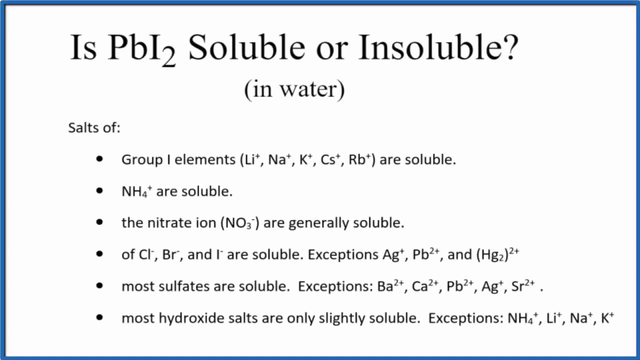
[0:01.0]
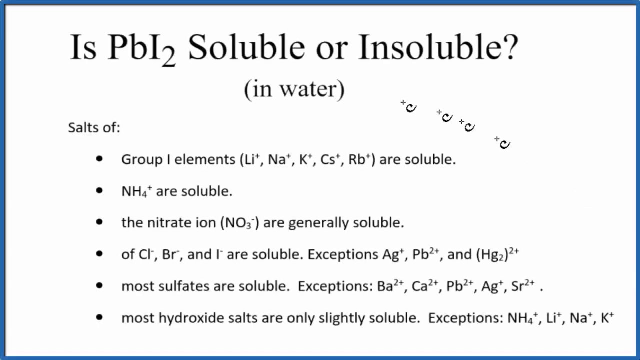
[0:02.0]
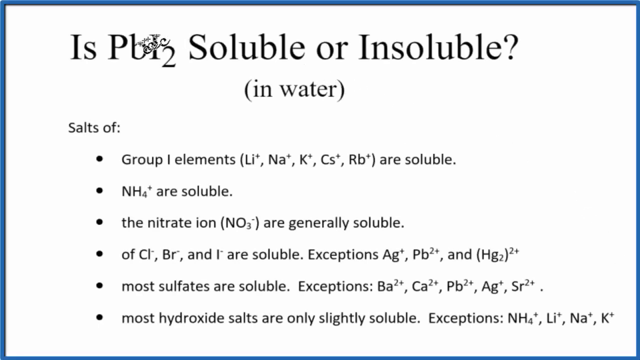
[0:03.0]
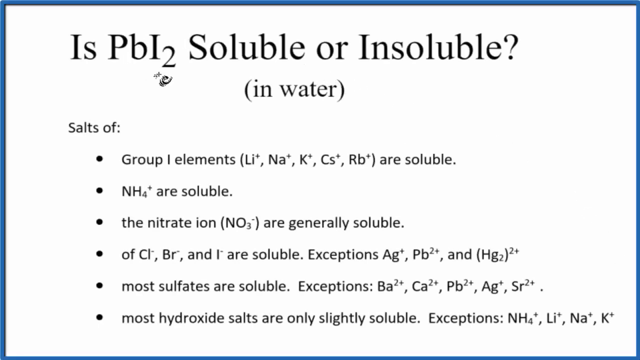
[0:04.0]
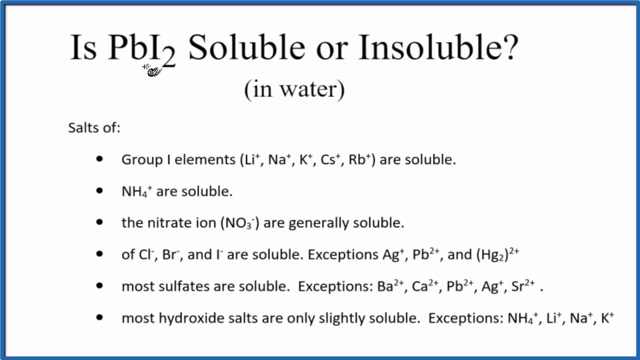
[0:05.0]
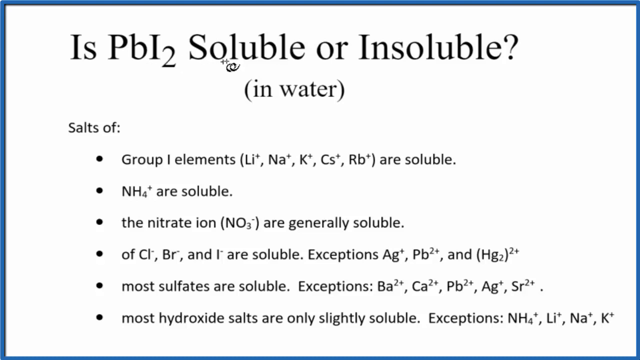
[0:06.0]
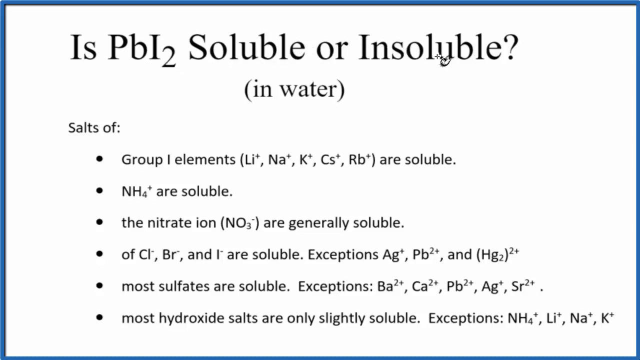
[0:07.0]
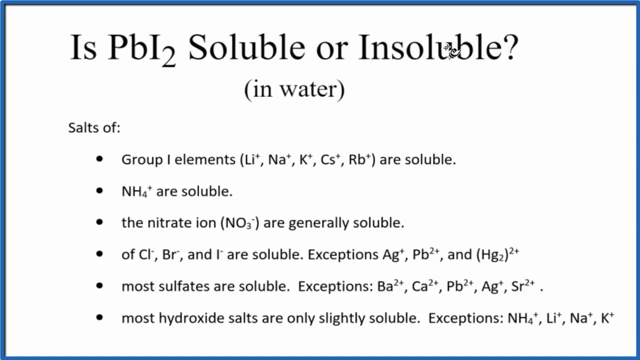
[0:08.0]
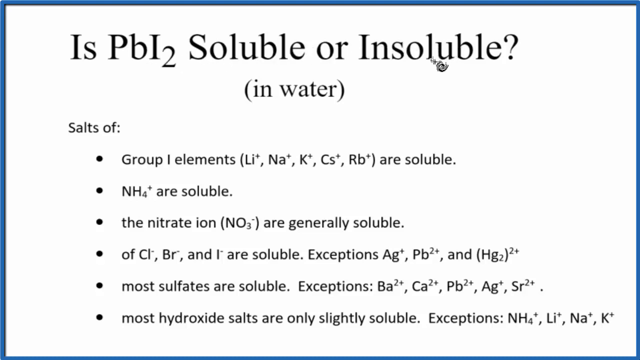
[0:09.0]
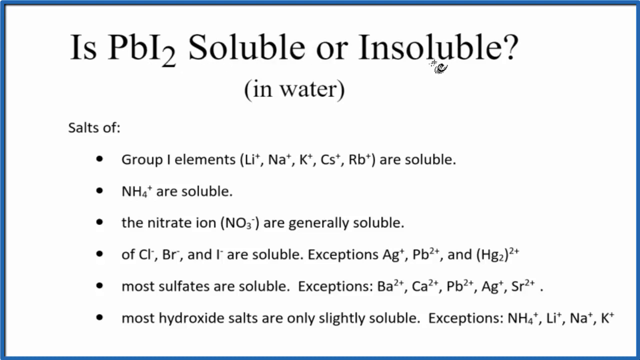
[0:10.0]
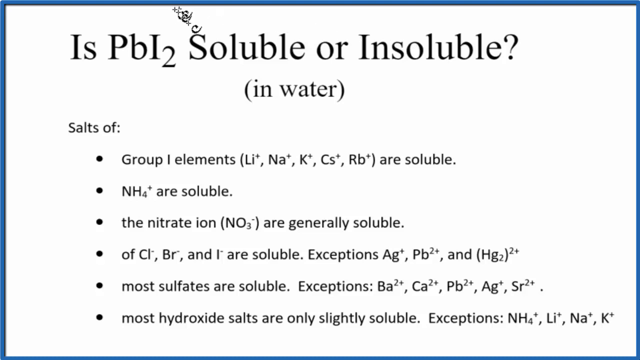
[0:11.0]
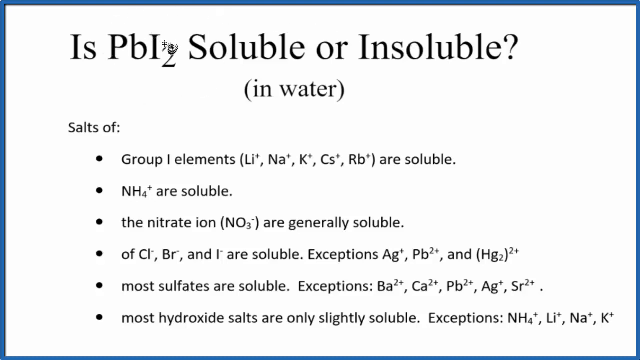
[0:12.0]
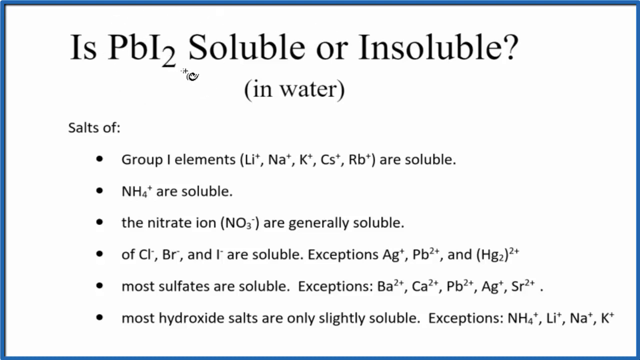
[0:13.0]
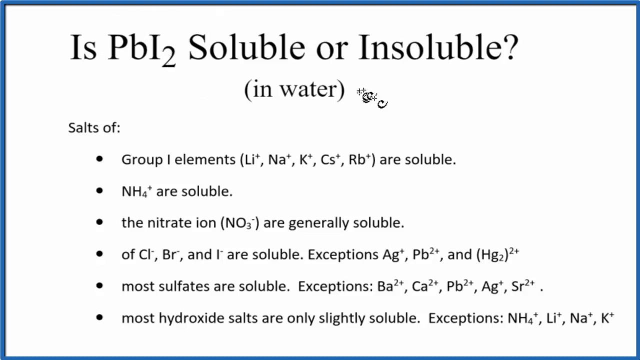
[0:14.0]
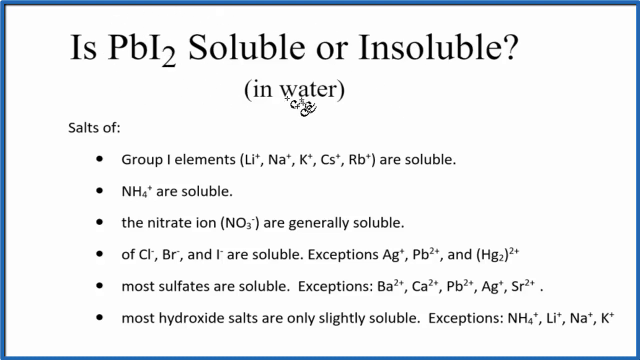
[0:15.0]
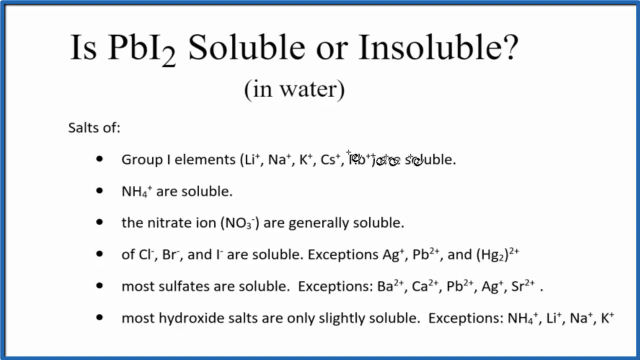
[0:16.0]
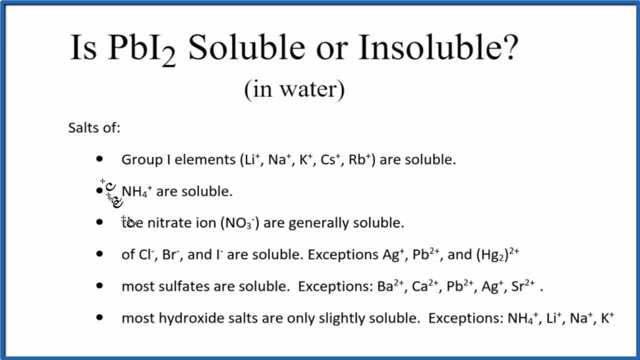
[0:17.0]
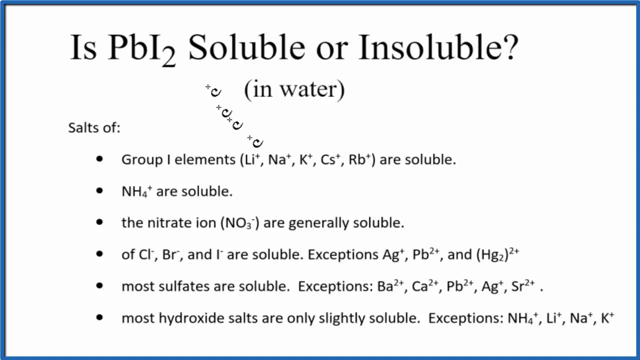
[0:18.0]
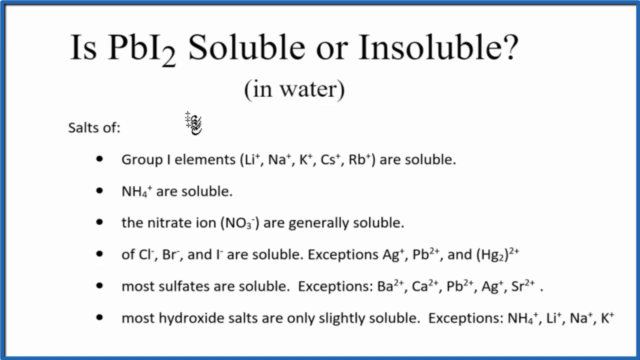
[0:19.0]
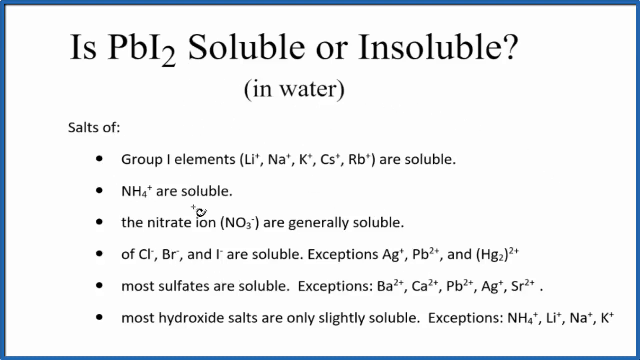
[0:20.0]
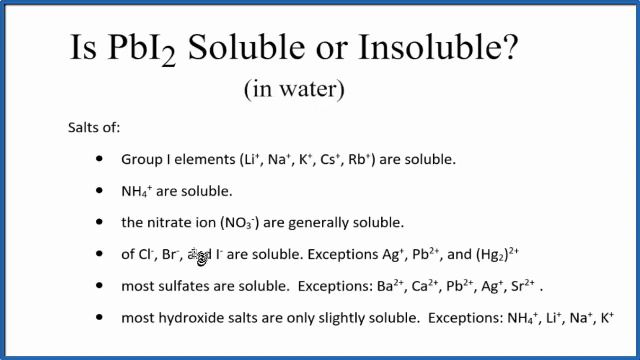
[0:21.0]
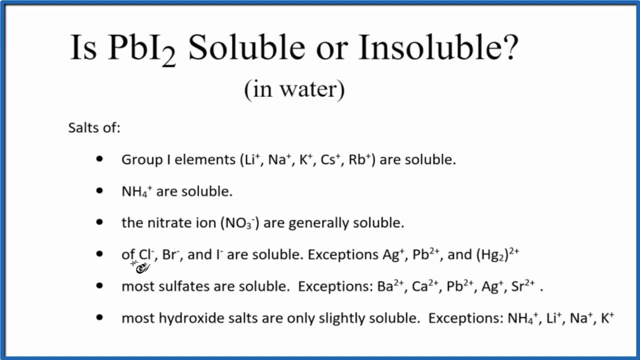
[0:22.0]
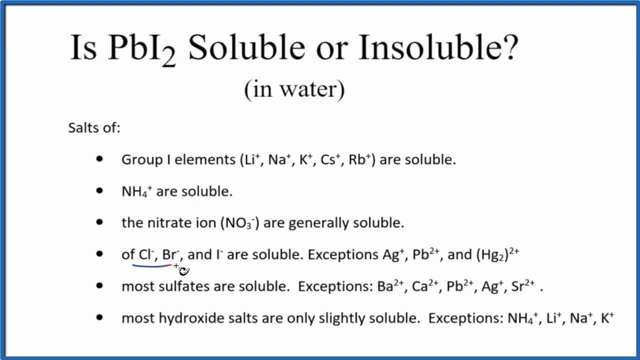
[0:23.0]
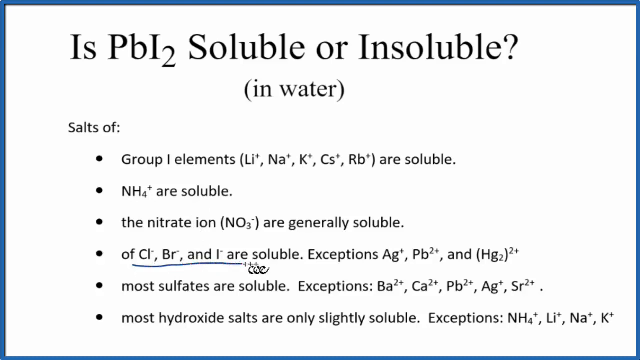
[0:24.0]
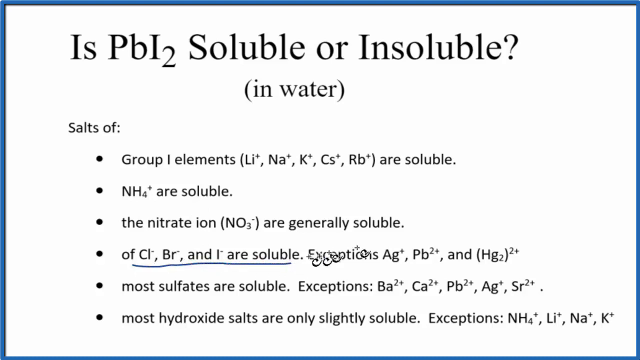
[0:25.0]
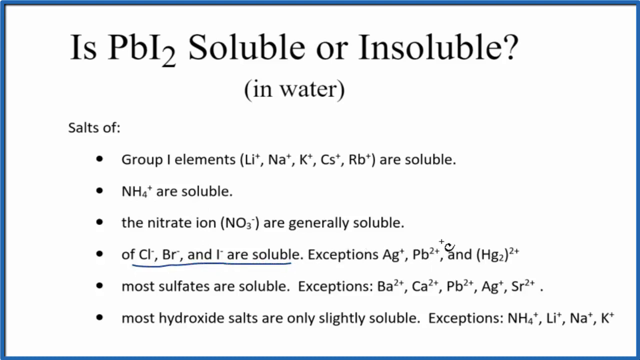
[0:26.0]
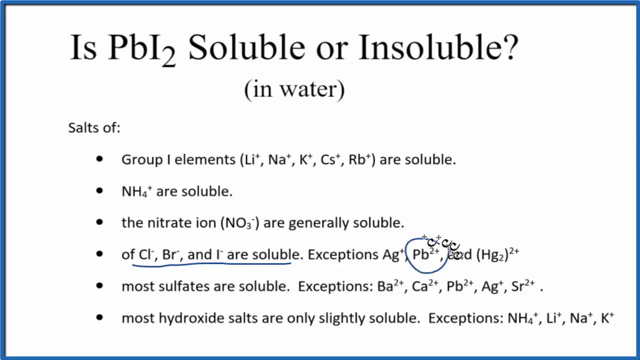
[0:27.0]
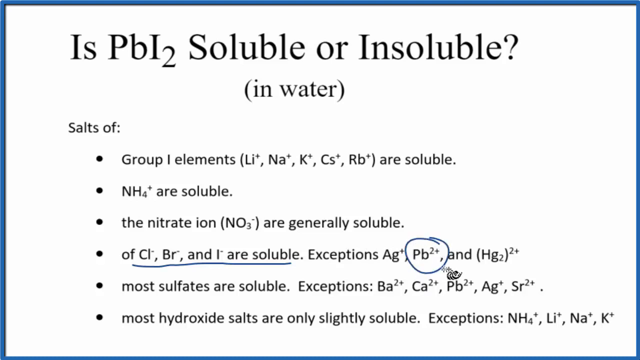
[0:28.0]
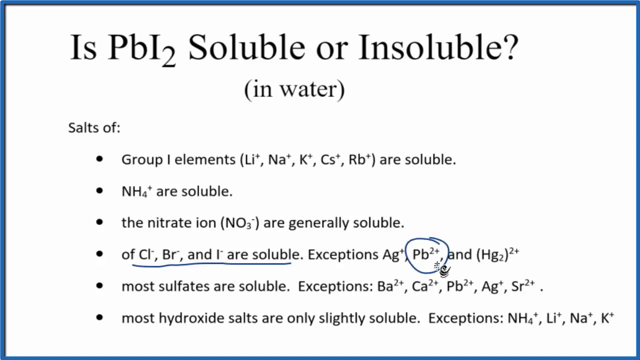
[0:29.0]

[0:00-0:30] The video opens on a white background covered with black text, and a mouse cursor is visible. The title at the top reads "is PbI2 soluble or insoluble", with "in water" in parentheses underneath. Below that it reads "salt of", followed by six bullet points. The first reads "group I elements Li+ Na+ K+ Cs+ Rb+ are soluble". The second reads "NH4+ are soluble". The third reads "the nitrate ion NO3- are generally soluble". The fourth reads "of Cl- Br- and I- are soluble exceptions Ag+ Pb2+ and Hg2 2+". The fifth reads "most sulfates are soluble exceptions Ba2+ Ca2+ Pb2+ Ag+ Sr2+". The last, at the bottom, reads "most hydroxide salts are only slightly soluble exceptions NH4+ Li+ Na+ K+". The cursor looks like a plus sign with a squiggly line at its bottom right. It moves up toward "PbI2" in the title, then to "soluble or insoluble", hovers over "insoluble" briefly, goes back and makes a counterclockwise circle around "PbI2". It then moves down to "in water" and makes a counterclockwise circle around it, appears to make another little circle, and goes very slowly down through the first, second, third and fourth bullet points. On the fourth bullet point it draws a blue underline under "Cl- Br- and I- are soluble", then draws a blue circle around "Pb2+" in "exceptions Ag+ Pb2+ and Hg2 2+". The cursor then moves up again.